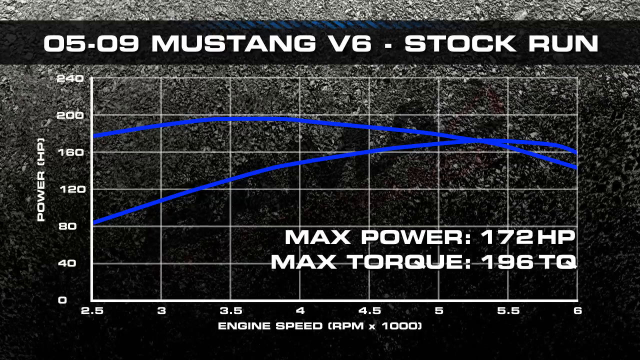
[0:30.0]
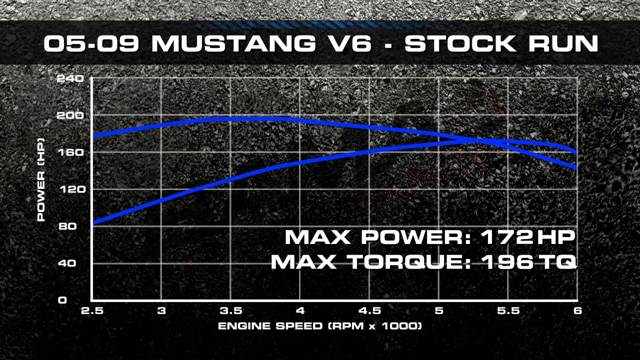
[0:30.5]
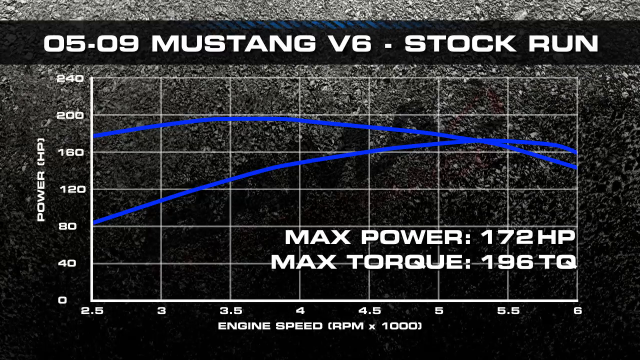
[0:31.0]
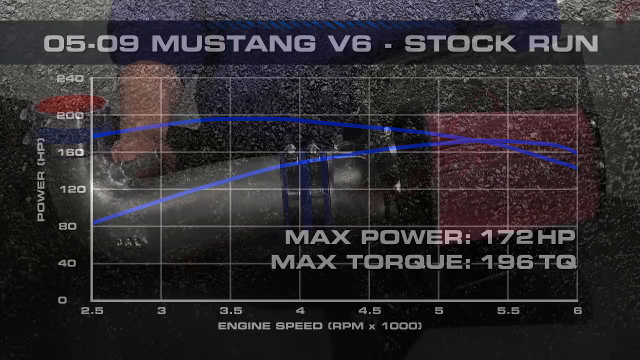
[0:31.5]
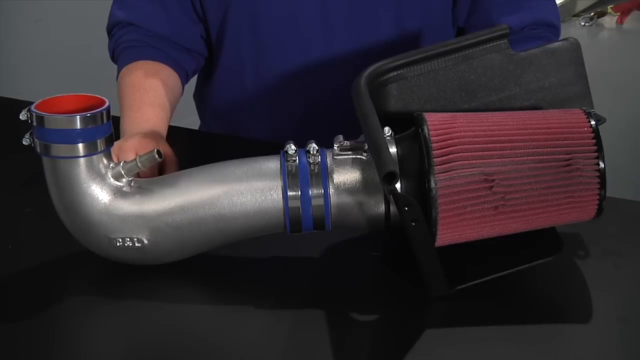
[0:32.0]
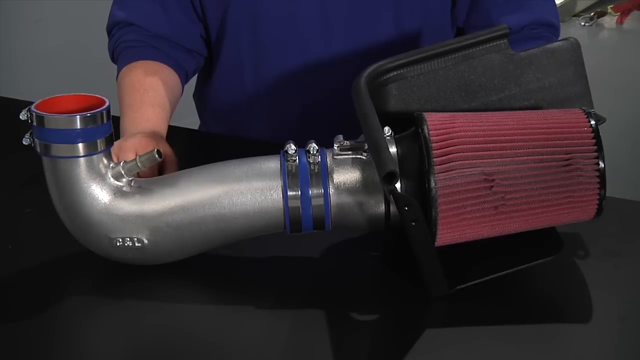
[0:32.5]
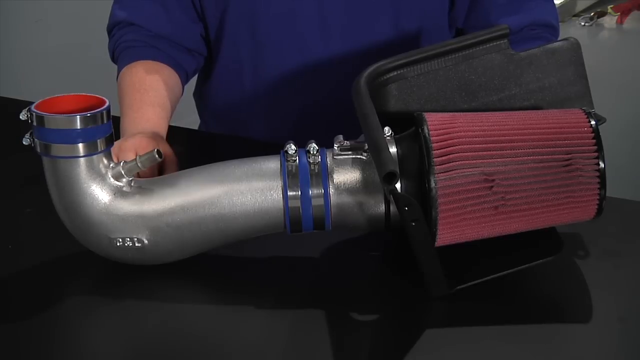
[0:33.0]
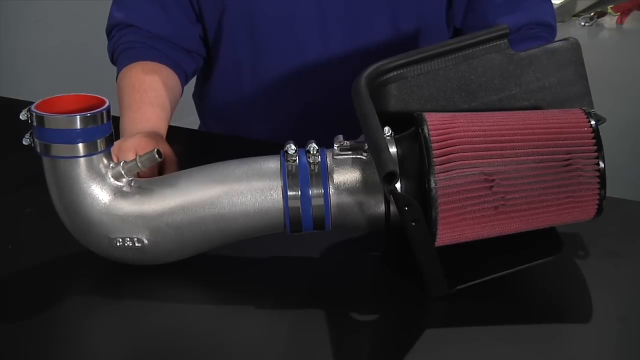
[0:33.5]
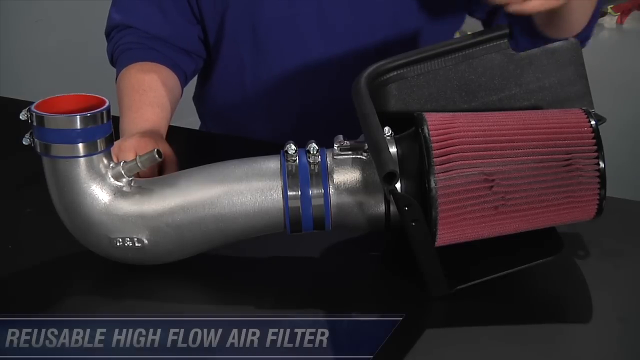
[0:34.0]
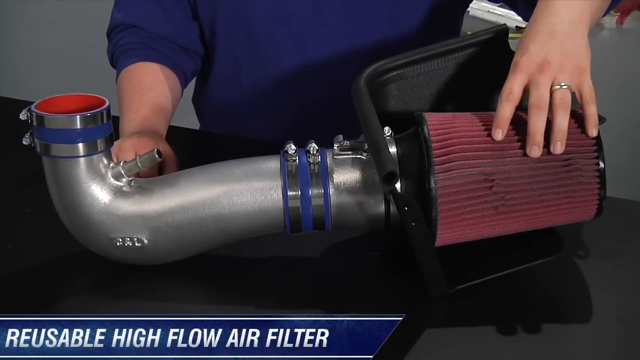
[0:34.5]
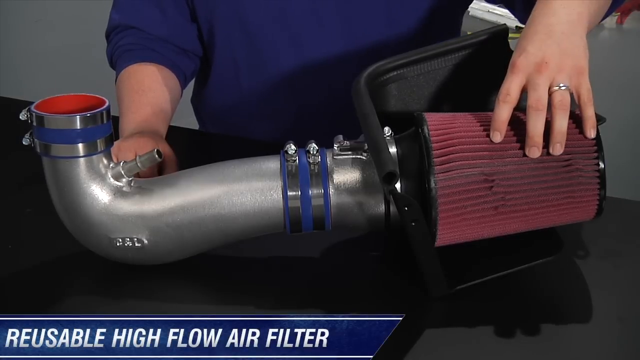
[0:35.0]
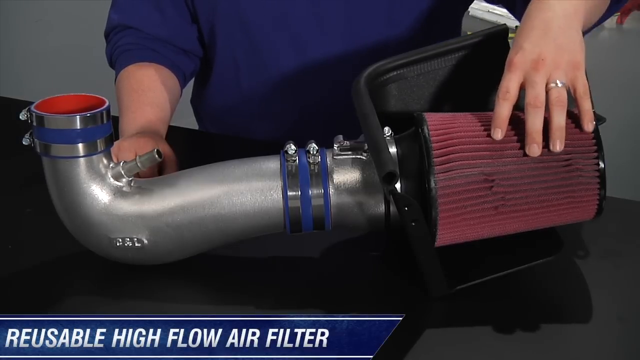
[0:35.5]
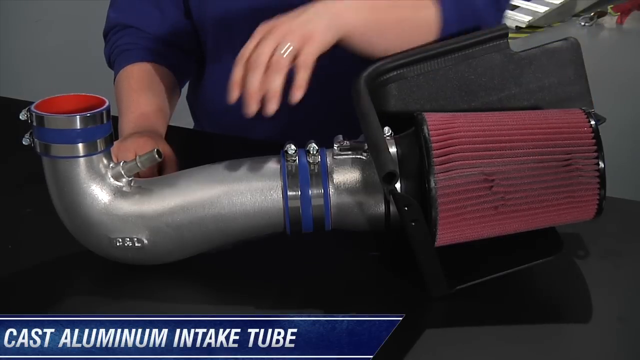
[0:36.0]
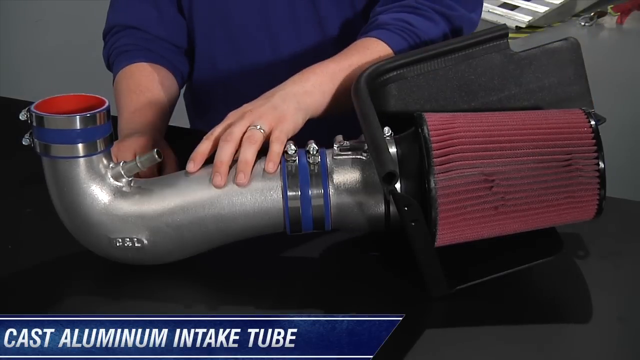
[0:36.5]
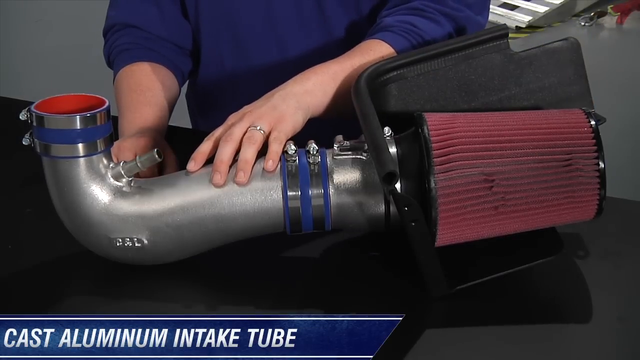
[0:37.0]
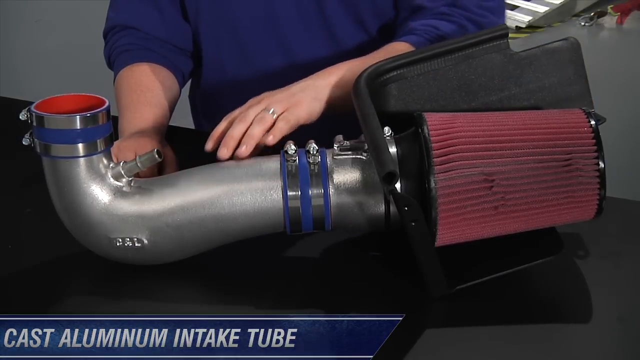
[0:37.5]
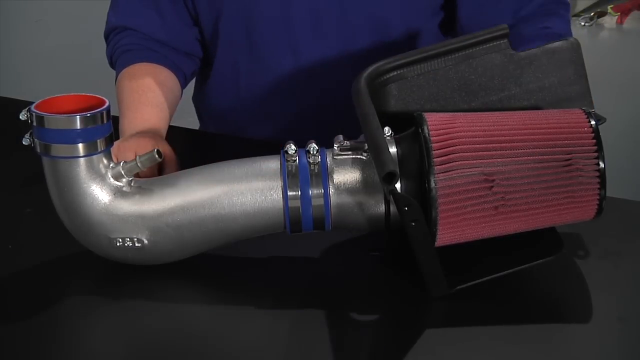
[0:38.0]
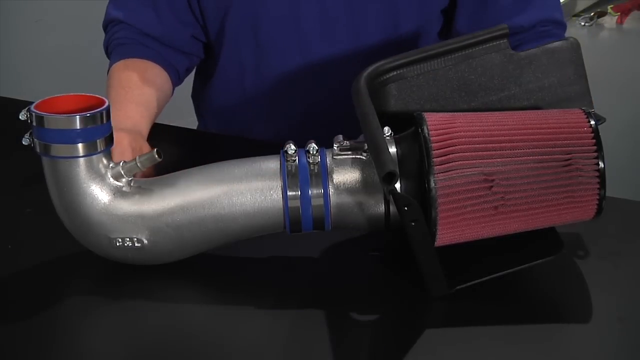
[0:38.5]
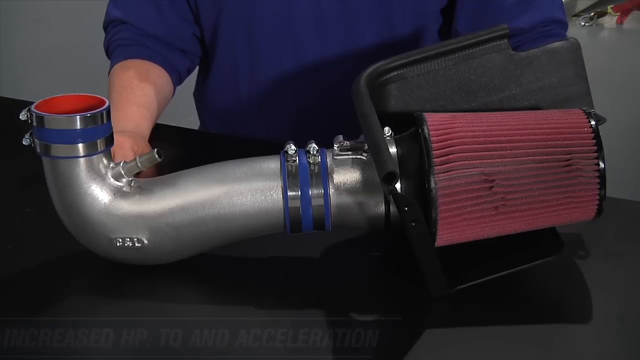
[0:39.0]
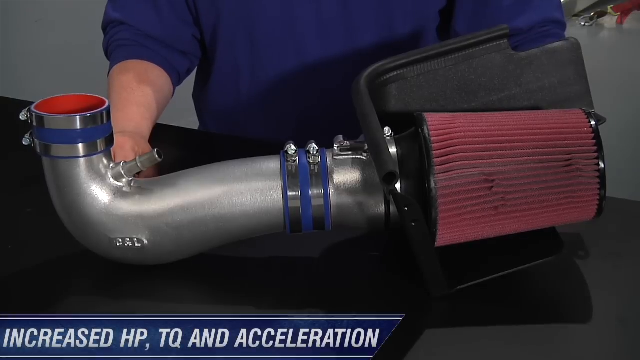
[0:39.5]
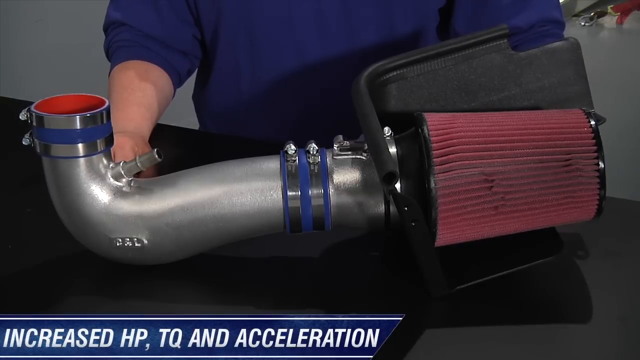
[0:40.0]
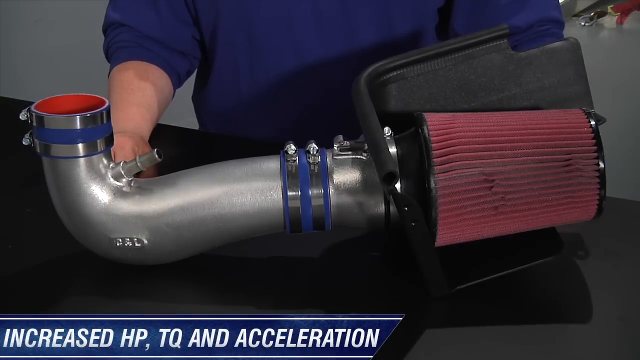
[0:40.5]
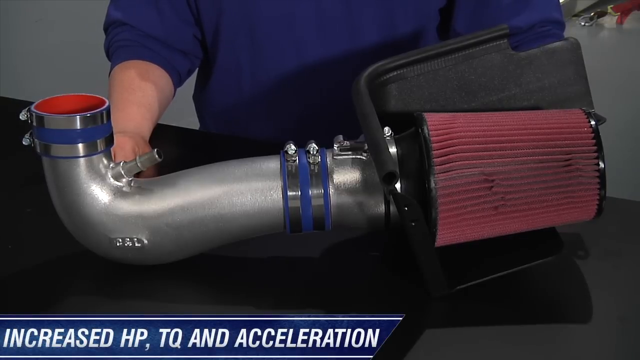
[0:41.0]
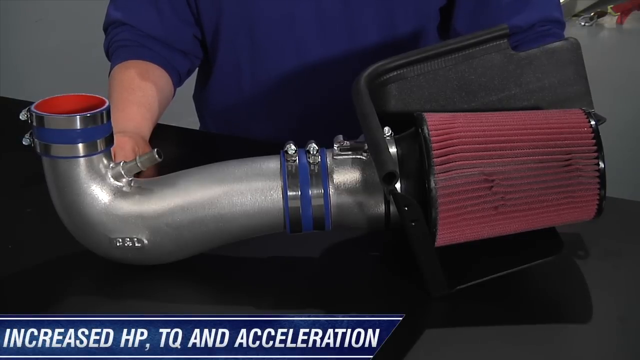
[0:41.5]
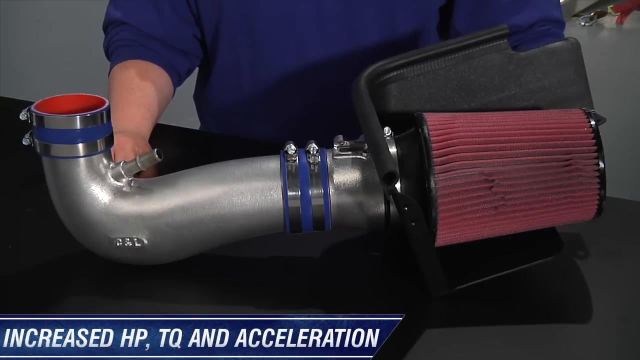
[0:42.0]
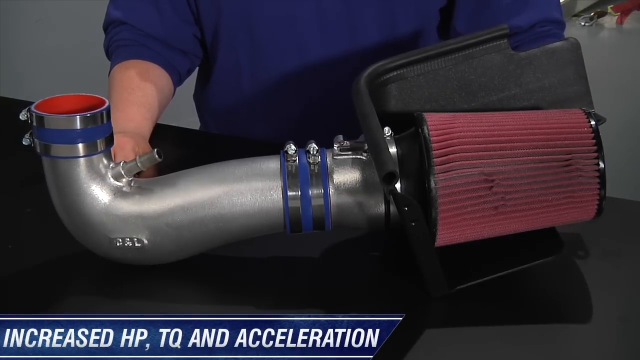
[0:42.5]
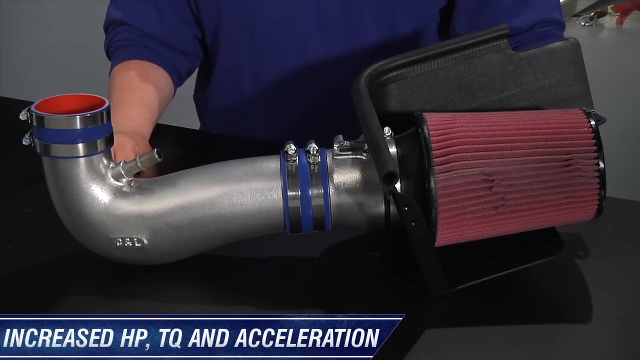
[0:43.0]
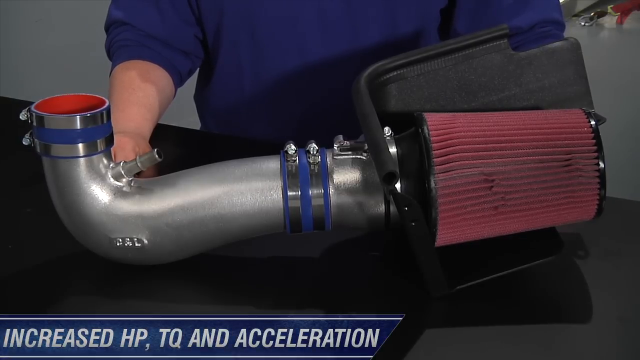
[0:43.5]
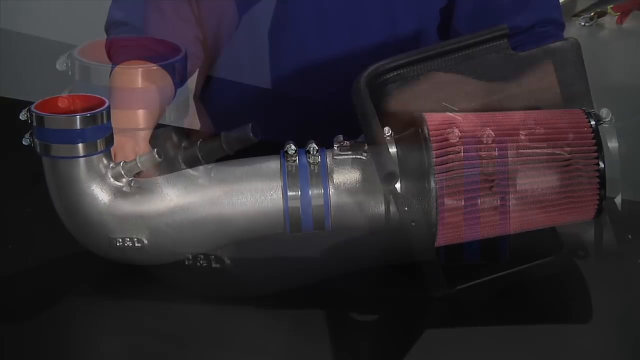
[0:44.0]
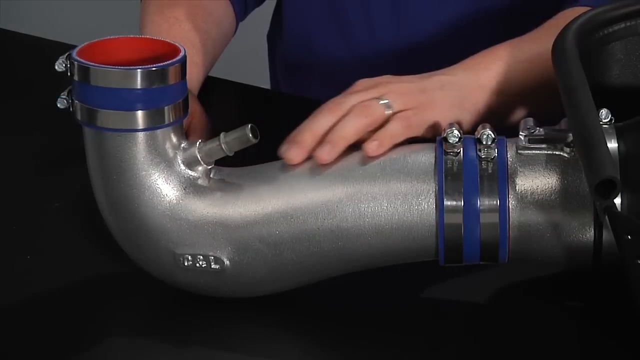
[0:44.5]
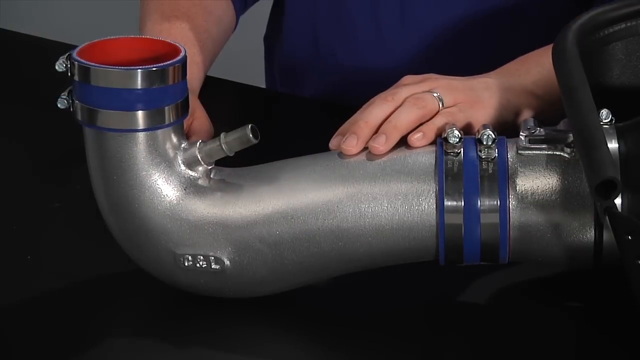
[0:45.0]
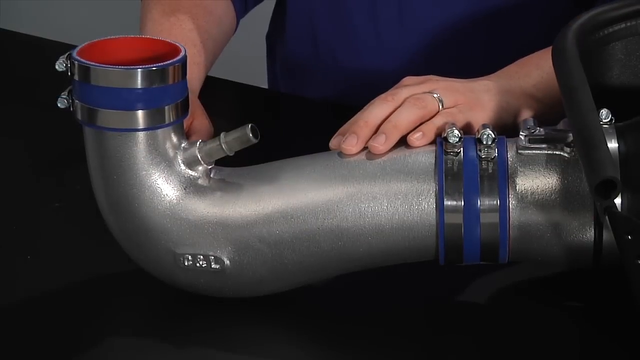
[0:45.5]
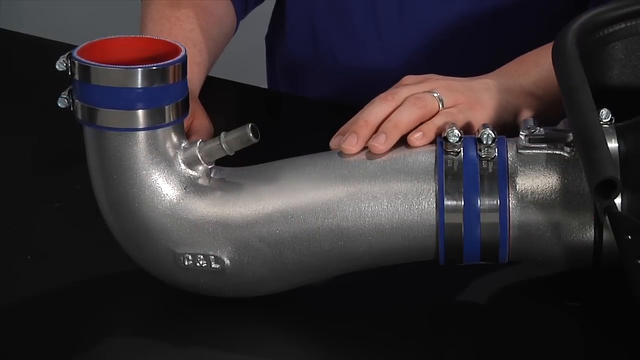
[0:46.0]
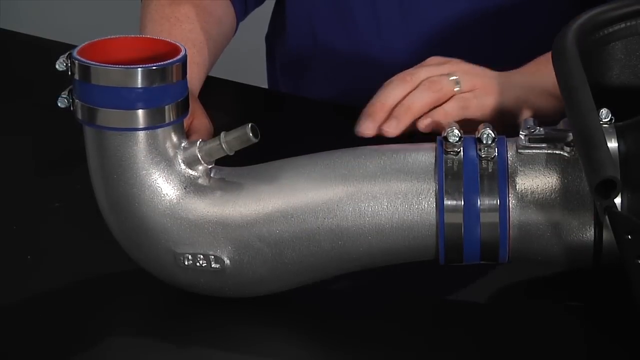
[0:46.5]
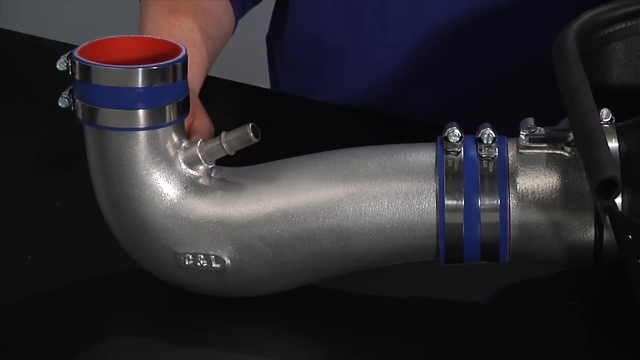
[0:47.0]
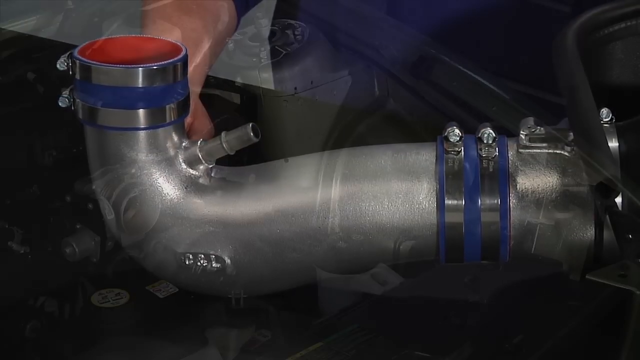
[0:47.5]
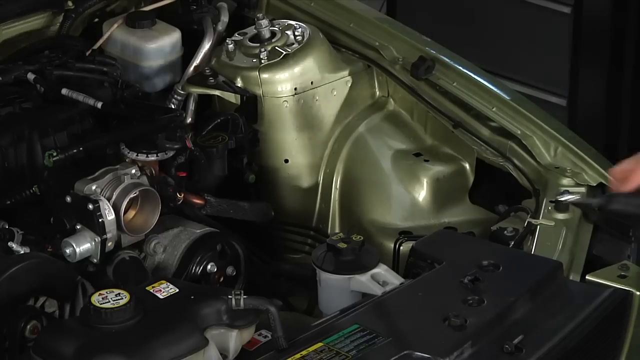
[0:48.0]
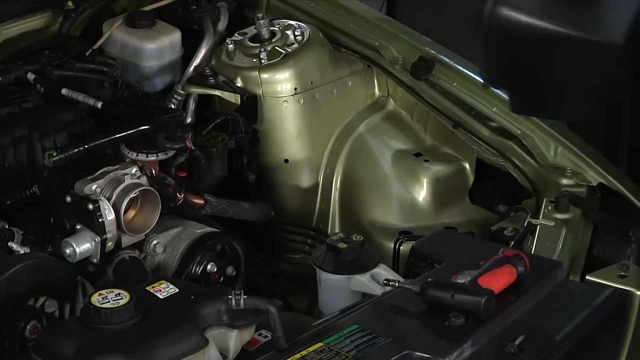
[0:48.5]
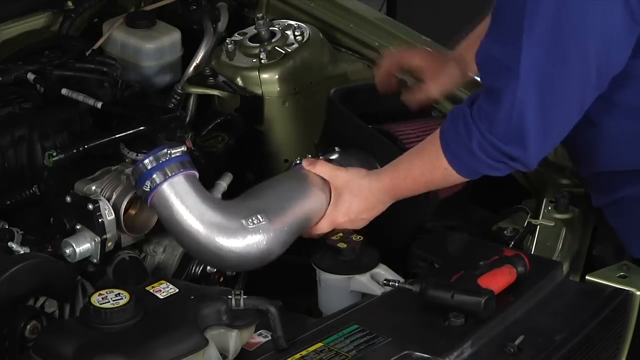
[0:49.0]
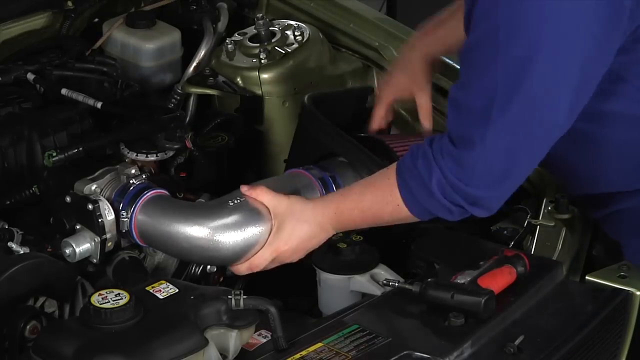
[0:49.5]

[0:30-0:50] A graph is shown. At the top, on a rectangular black background, it says "05-09 Mustang V6-Stock Run." Below that is a large graph in a checkered format. On the left side, "Power HP" is turned sideways in white font, with numbers running from the bottom up: 0, 40, 80, 120, 160, 200, 240. At the bottom of the graph it says "Engine Speed RPM-X-1000," with numbers 2.5, 3, 3.5, 4, 4.5, 5, 5.5 and 6. At the bottom right of the graph it says "Max Power 172 HP, Max Torque 196 TQ," and a small blue line on the graph shows this. The scene changes to a large intake with the man standing behind it. He touches the back end and then the metal front of the intake with his left hand, and he wears a ring on his finger. A close-up shows the metal part of the intake before the scene switches to the inside of the front with the hood open.